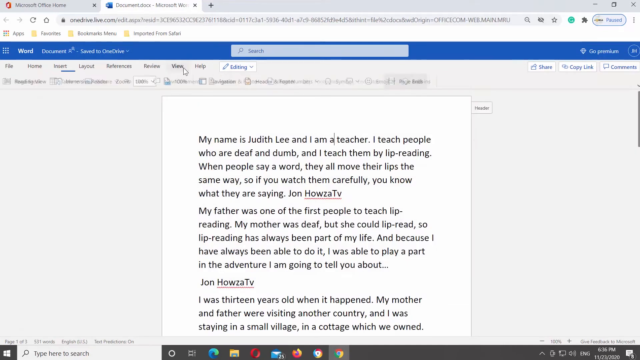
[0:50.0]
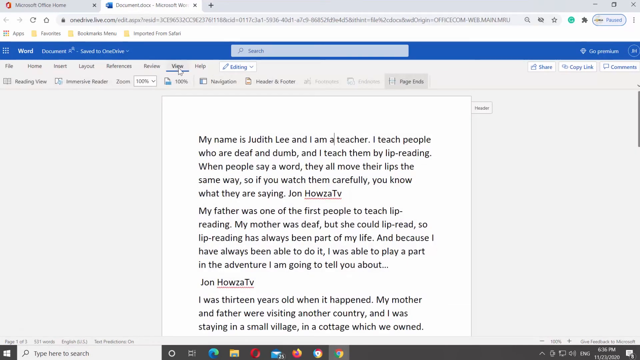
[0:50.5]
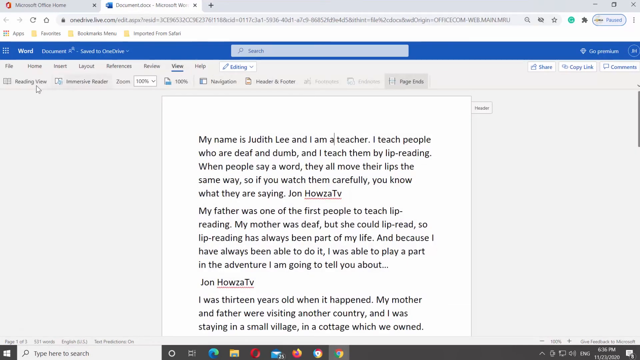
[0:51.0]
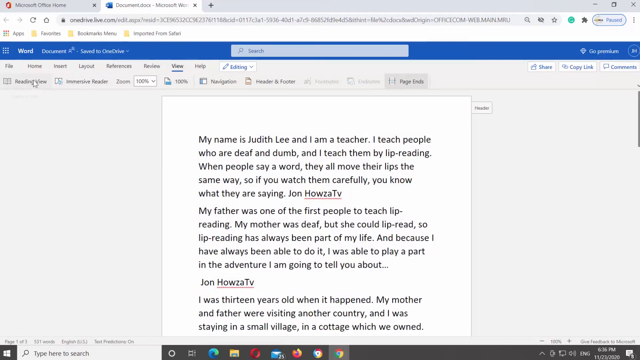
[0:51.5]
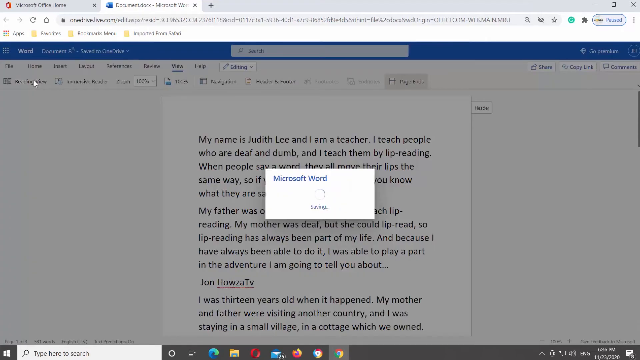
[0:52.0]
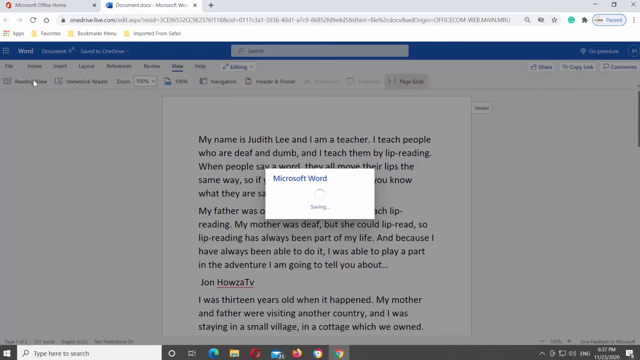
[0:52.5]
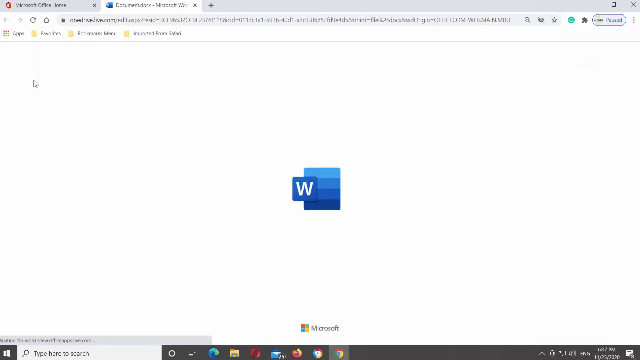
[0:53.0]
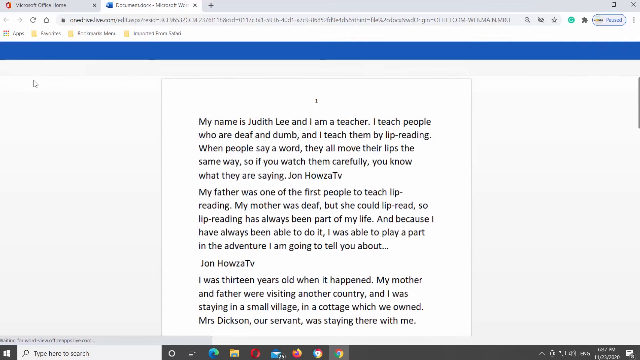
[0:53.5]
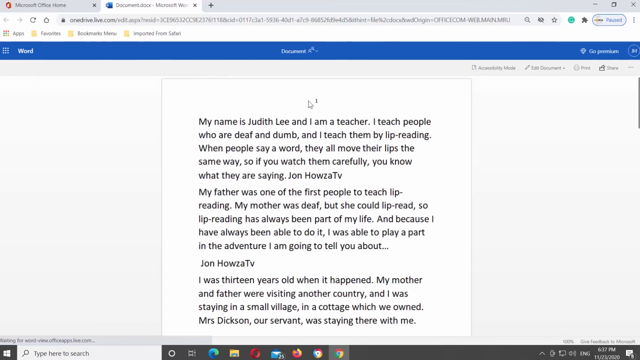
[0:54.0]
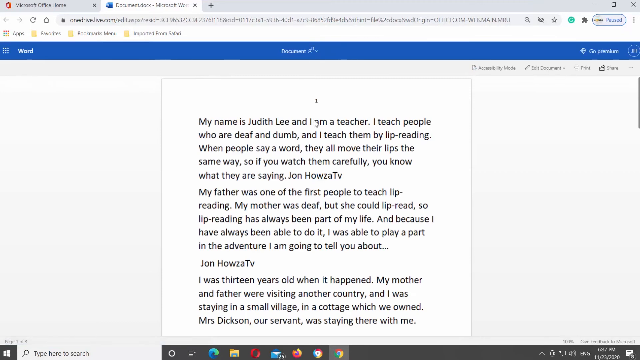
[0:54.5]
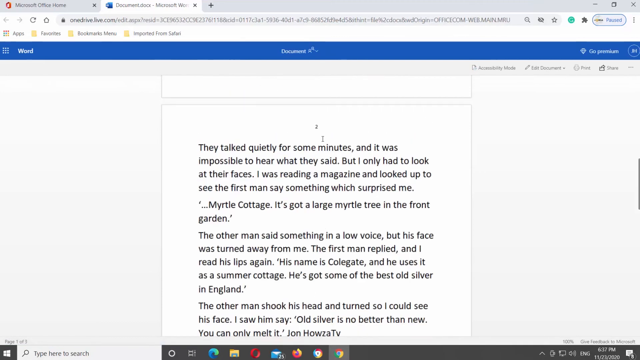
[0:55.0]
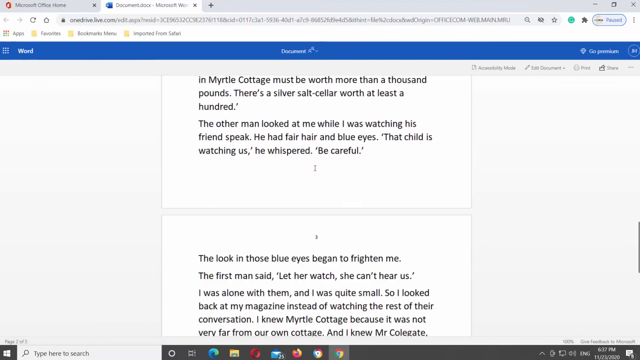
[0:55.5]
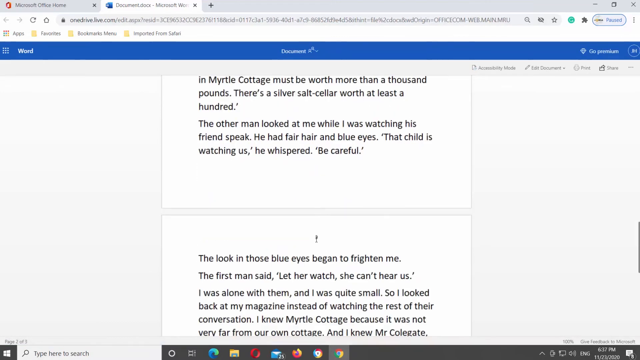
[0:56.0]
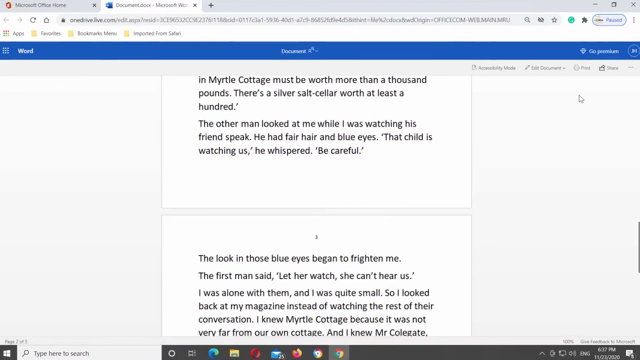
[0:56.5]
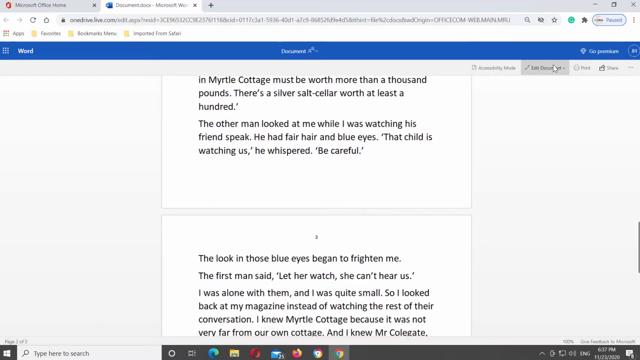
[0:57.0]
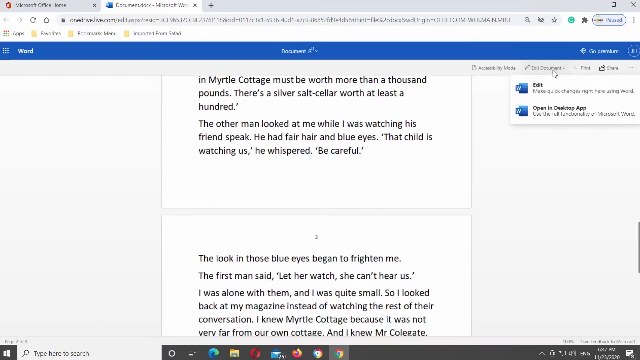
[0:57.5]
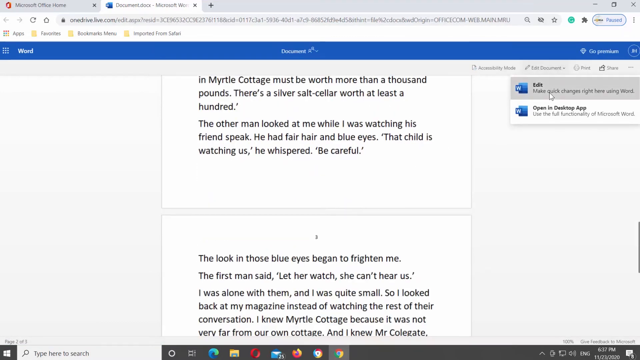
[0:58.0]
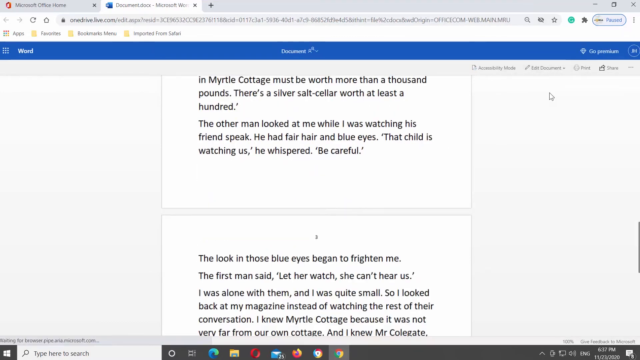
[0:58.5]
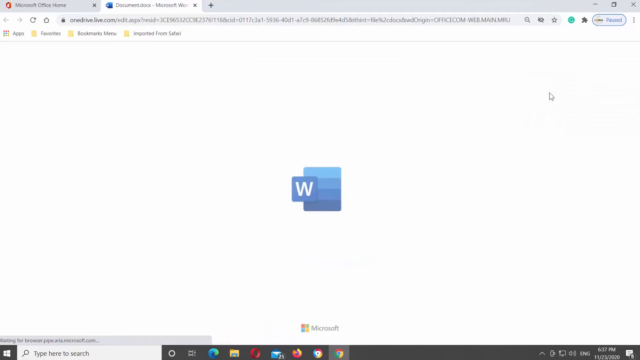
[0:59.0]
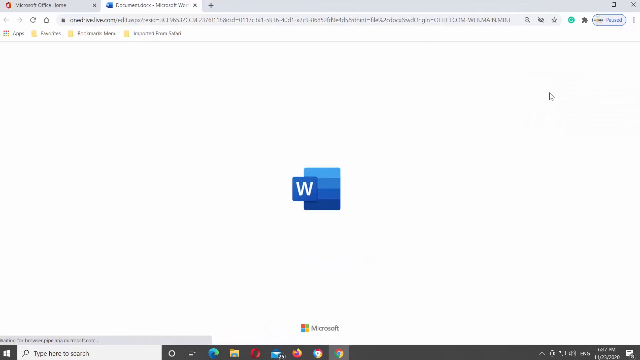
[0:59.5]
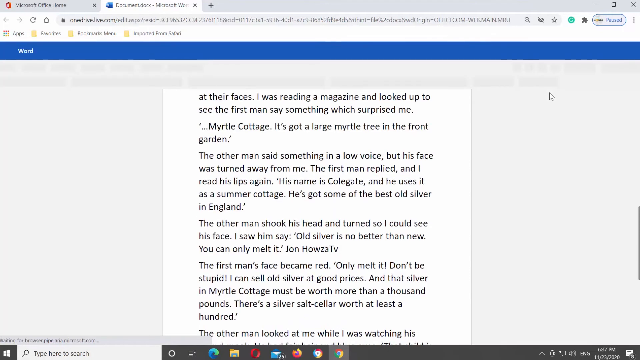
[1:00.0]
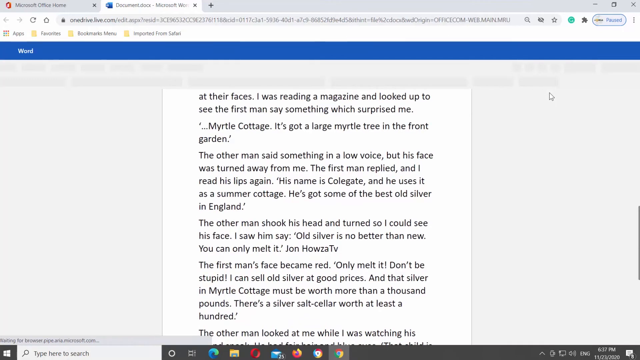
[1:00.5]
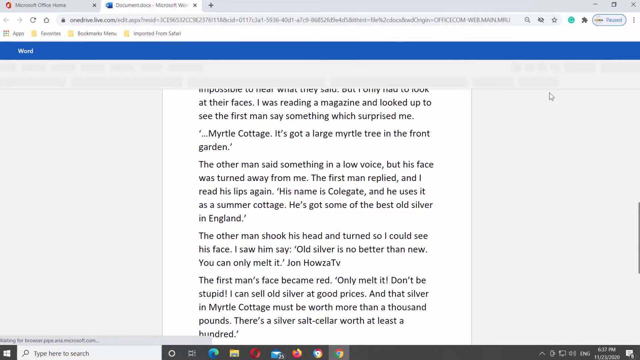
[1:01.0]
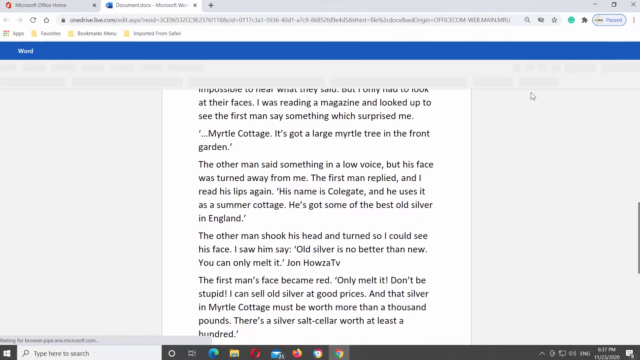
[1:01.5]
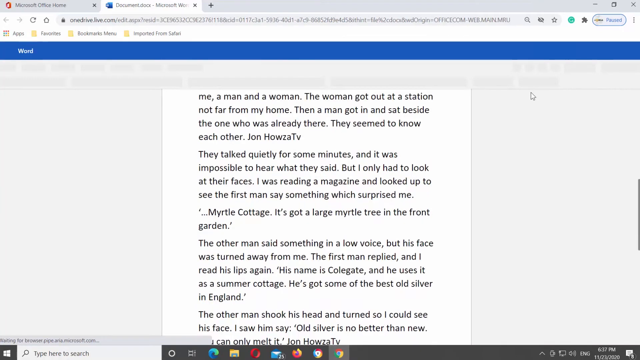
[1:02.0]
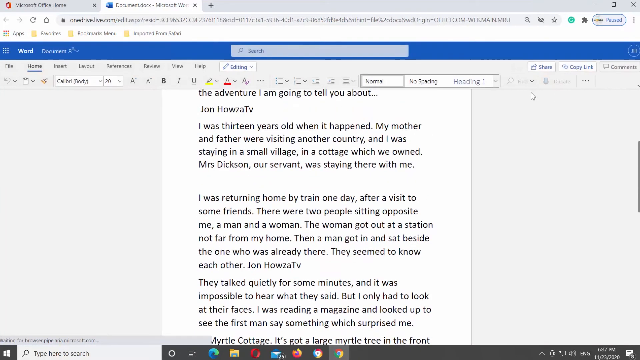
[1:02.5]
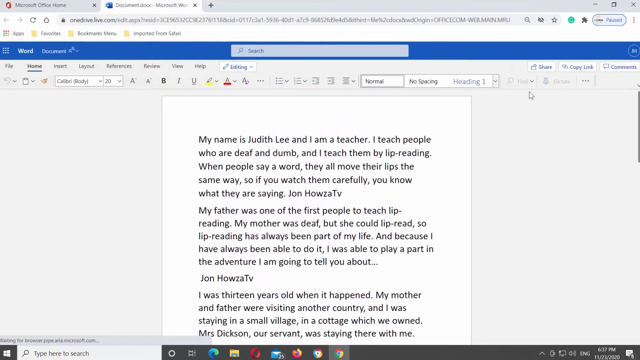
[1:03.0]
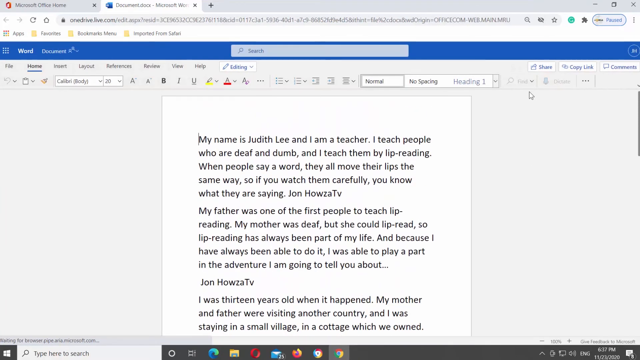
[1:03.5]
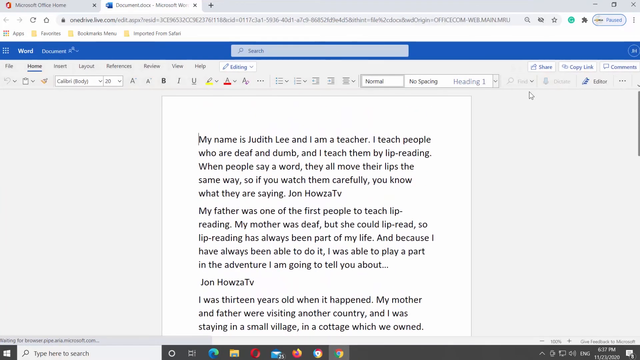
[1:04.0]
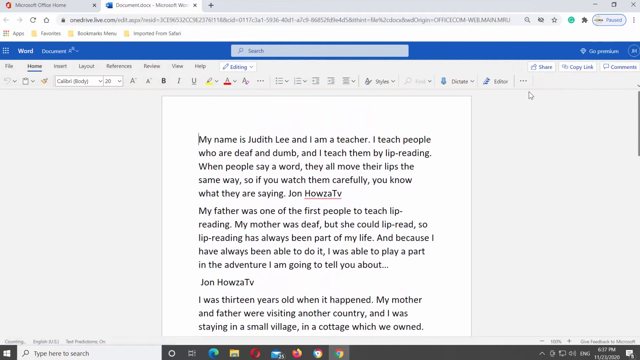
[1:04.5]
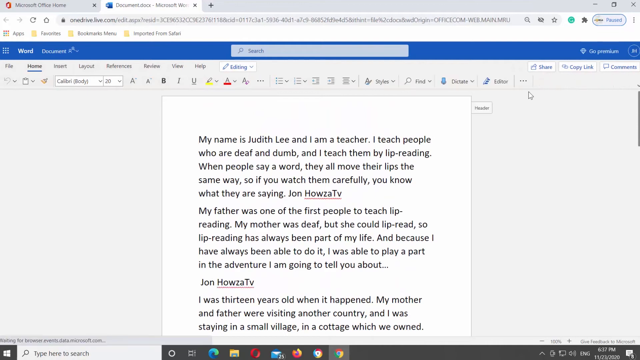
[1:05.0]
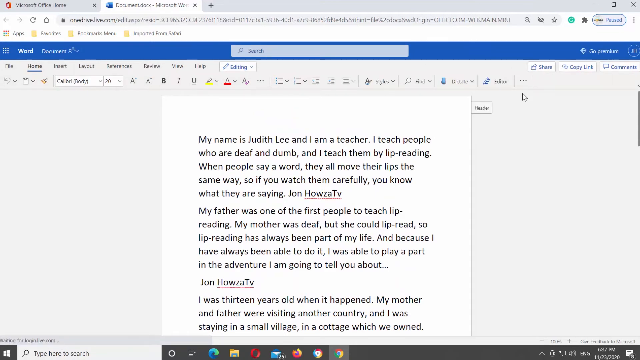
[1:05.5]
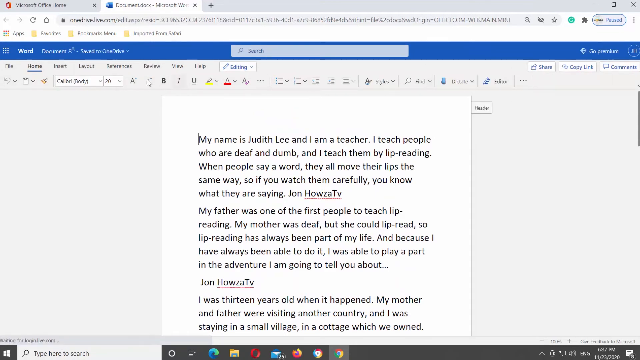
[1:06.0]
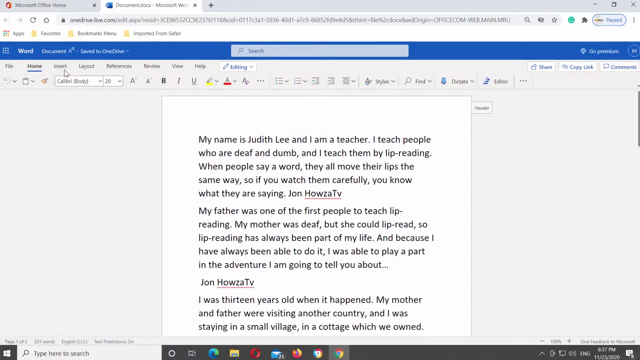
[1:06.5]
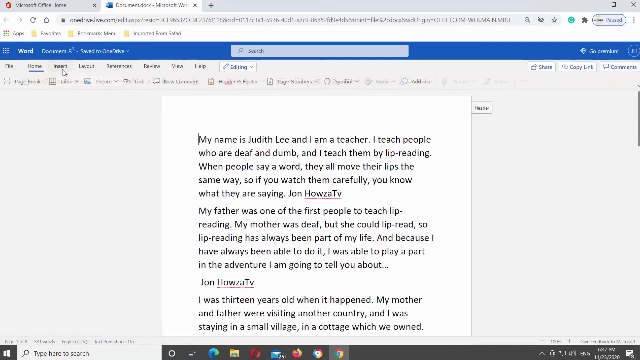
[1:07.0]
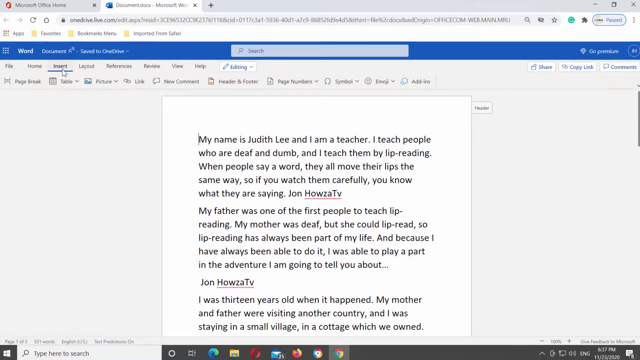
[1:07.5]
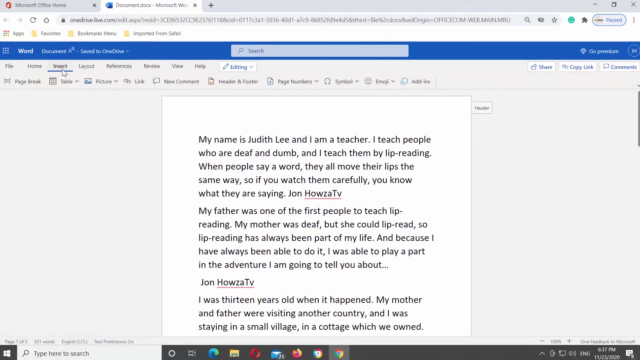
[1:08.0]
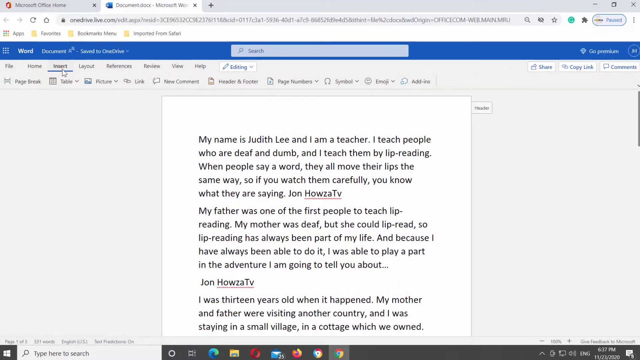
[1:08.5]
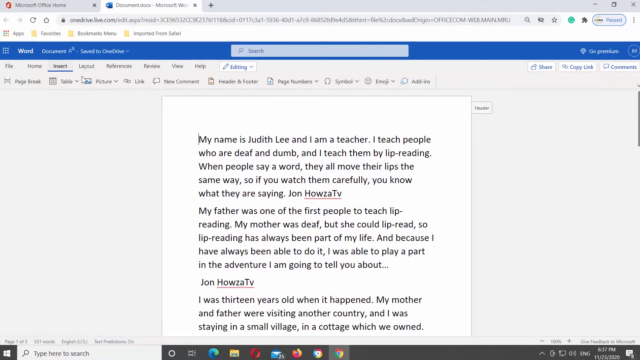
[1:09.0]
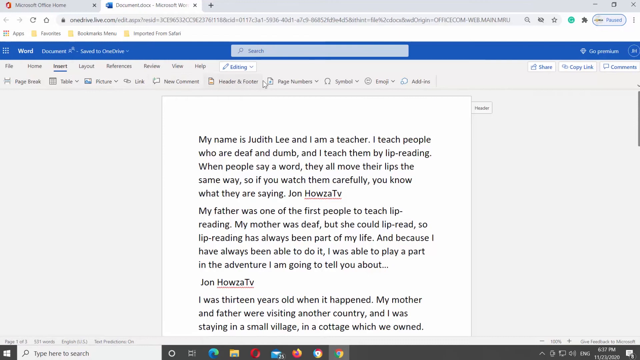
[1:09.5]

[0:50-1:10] Six icons are visible on the desktop home page, for making and editing documents: Excel, Word, PowerPoint and OneNote. A person navigates to the Word icon and clicks it, then writes notes introducing himself as Judith, a teacher, in a letter to the HOWZA TV. The person scrolls down through the text, showing how long it is, and edits the document, setting the page number. The letter tells how he teaches deaf people by lipreading and how he started teaching them.